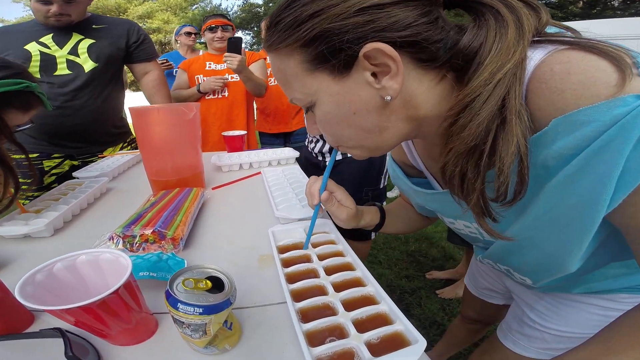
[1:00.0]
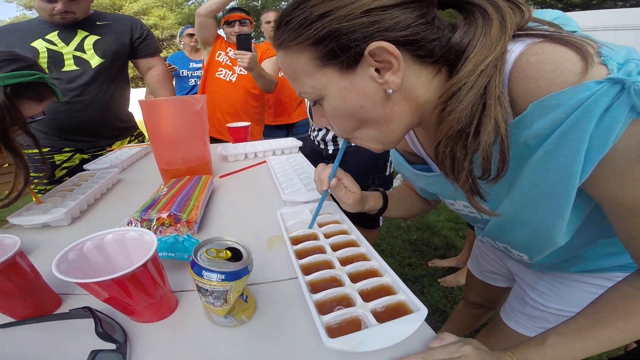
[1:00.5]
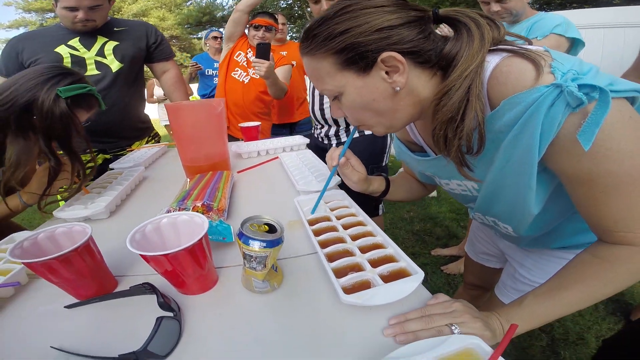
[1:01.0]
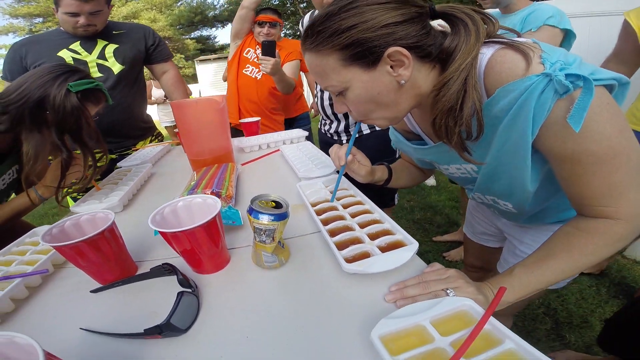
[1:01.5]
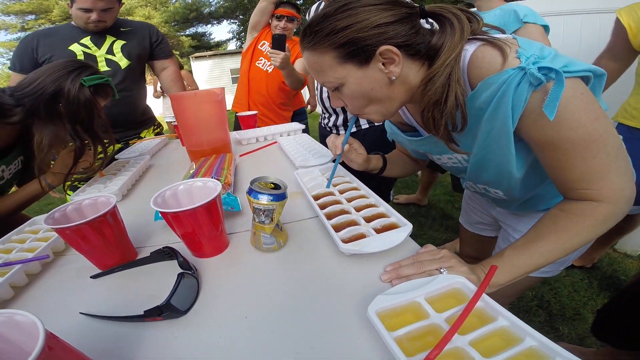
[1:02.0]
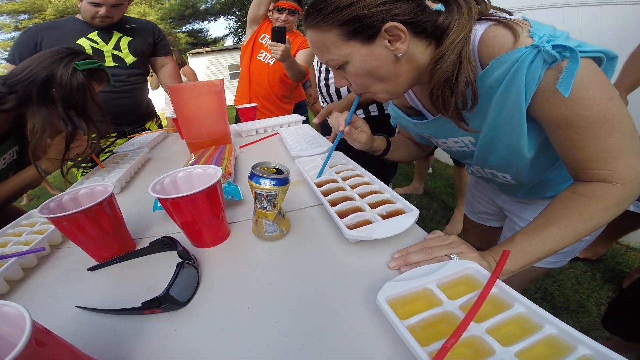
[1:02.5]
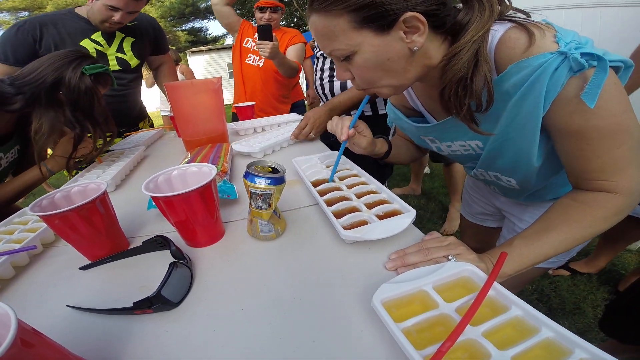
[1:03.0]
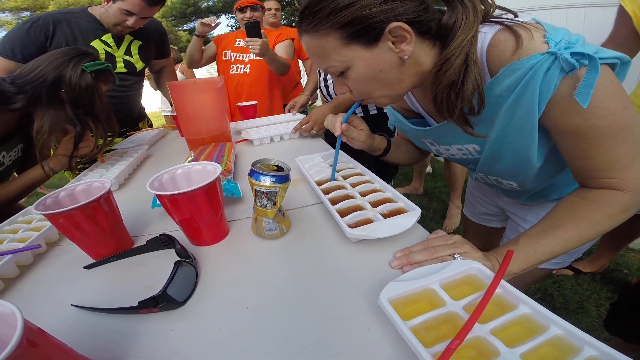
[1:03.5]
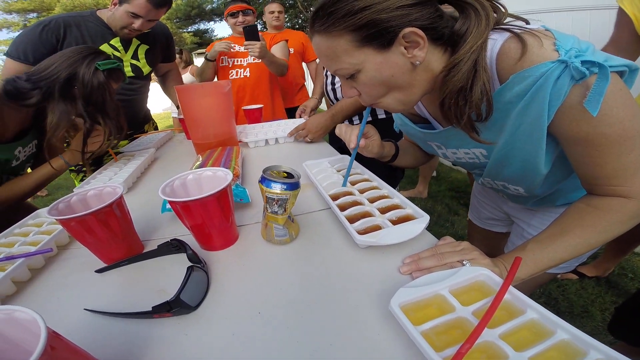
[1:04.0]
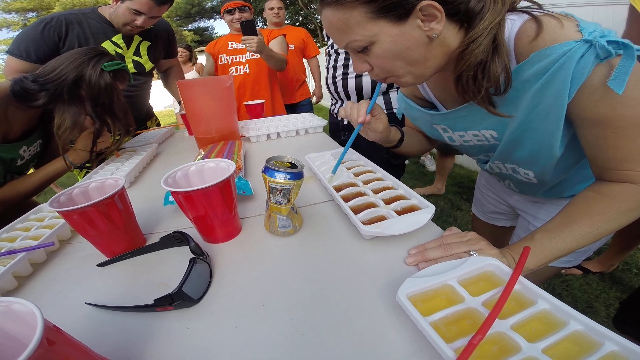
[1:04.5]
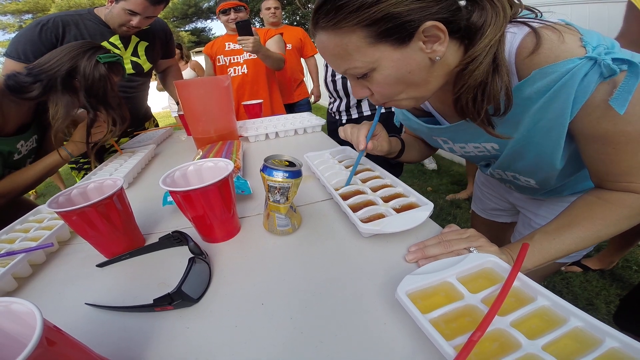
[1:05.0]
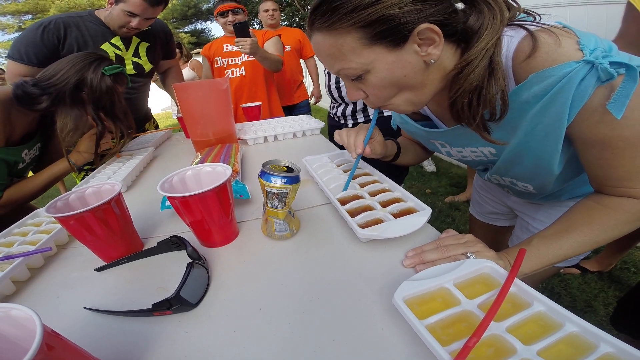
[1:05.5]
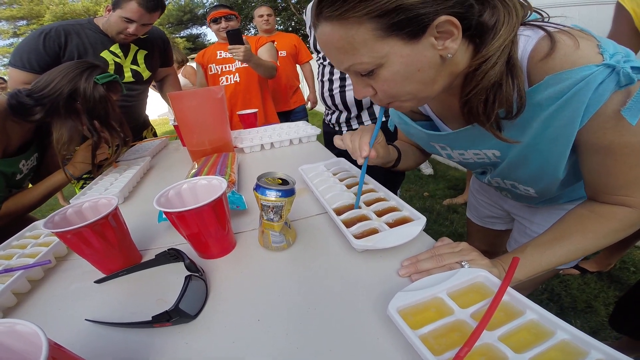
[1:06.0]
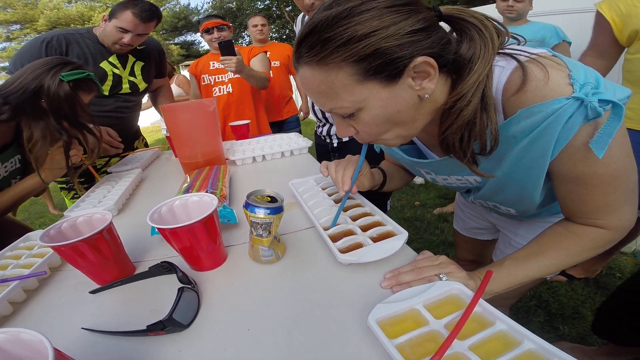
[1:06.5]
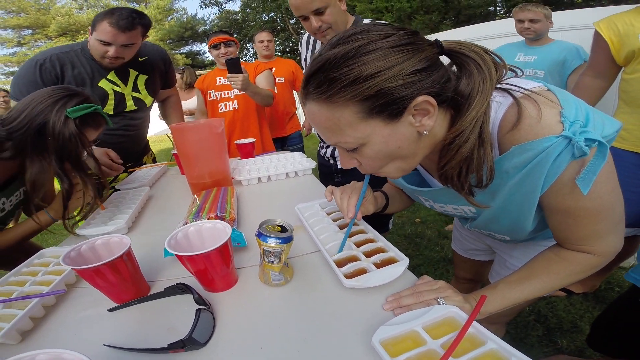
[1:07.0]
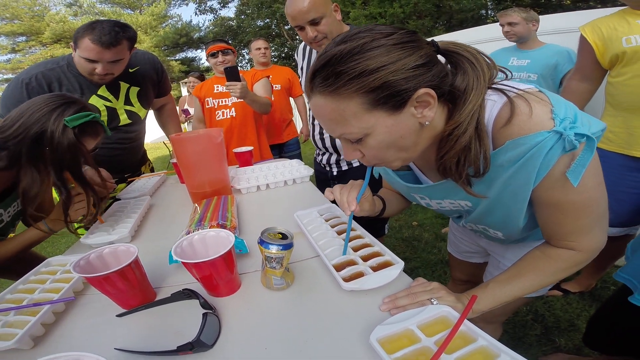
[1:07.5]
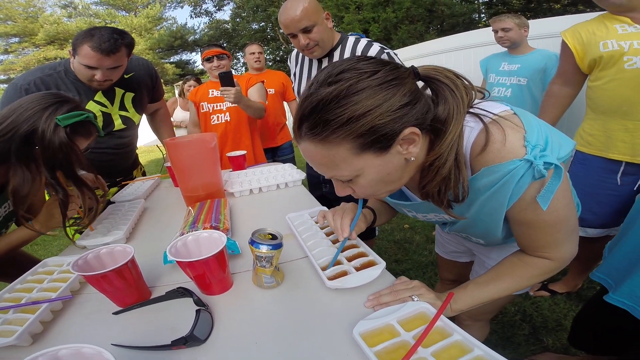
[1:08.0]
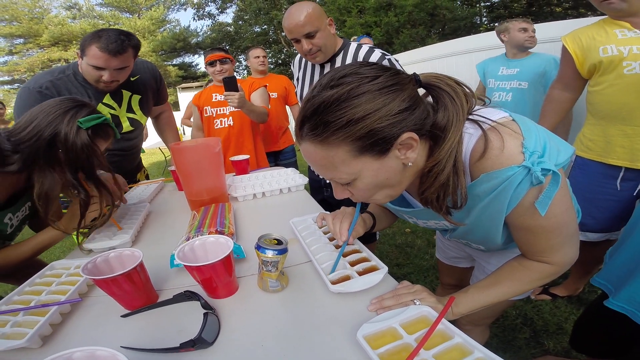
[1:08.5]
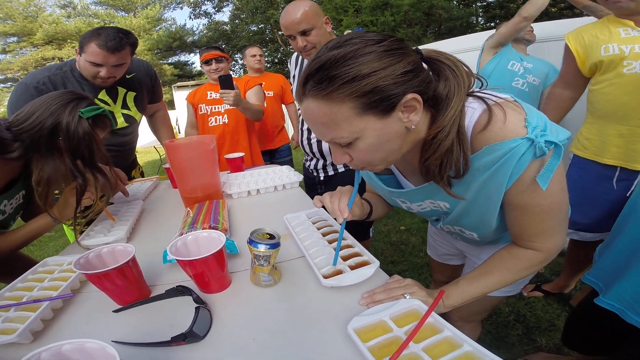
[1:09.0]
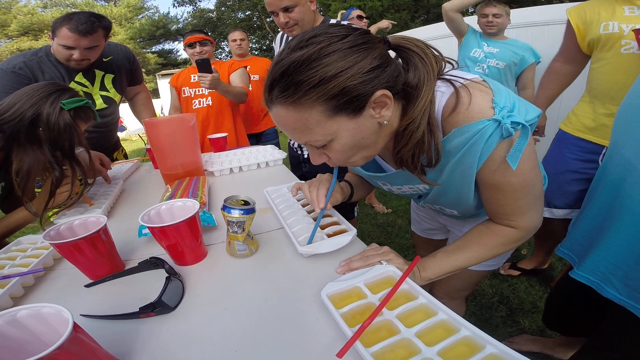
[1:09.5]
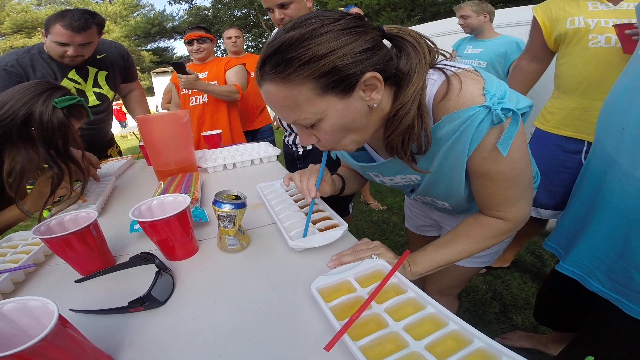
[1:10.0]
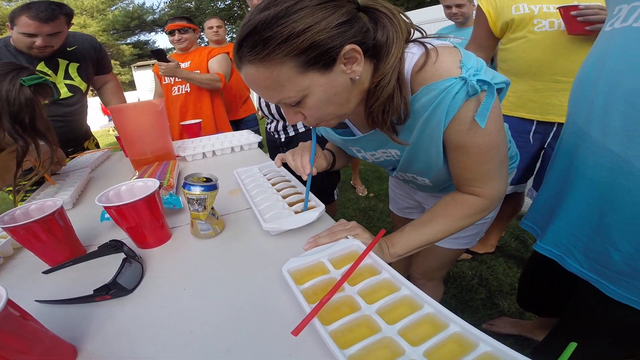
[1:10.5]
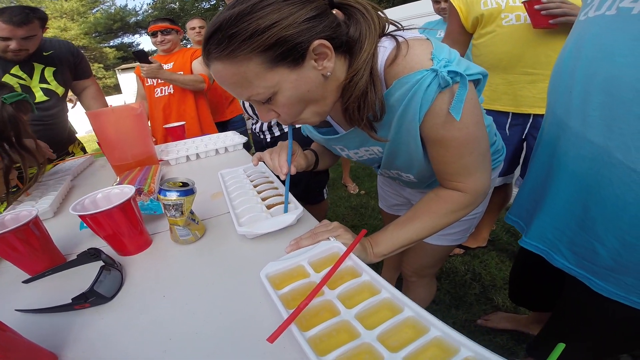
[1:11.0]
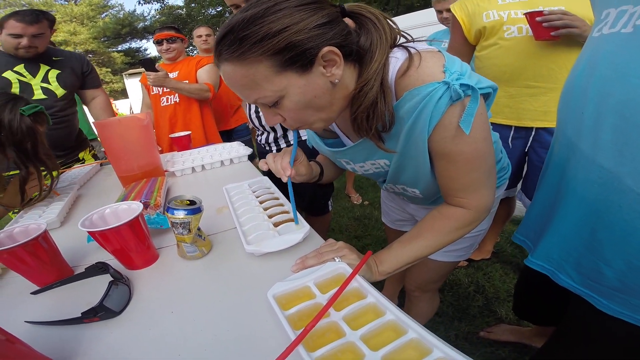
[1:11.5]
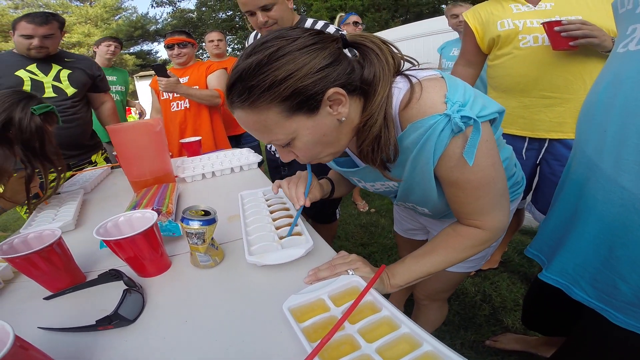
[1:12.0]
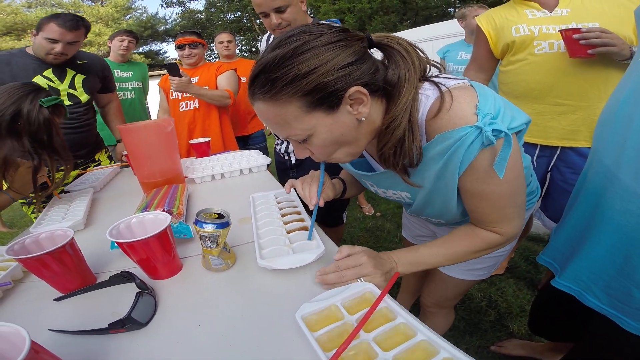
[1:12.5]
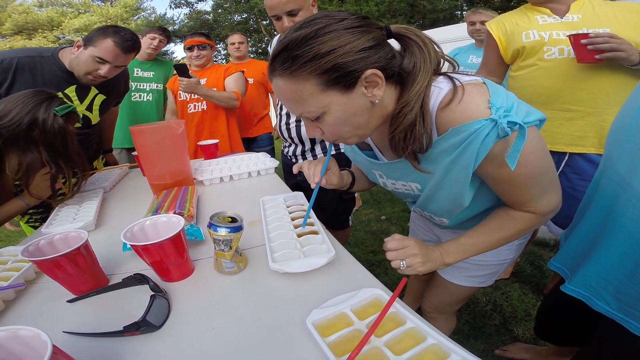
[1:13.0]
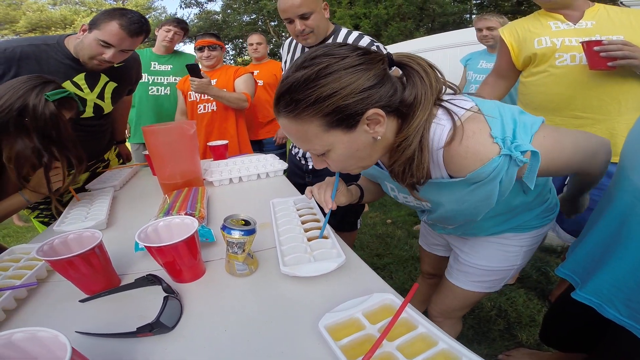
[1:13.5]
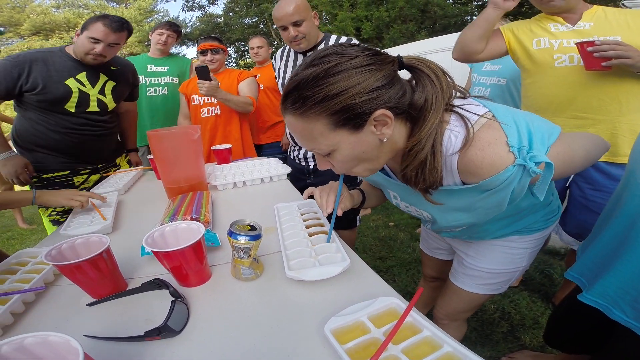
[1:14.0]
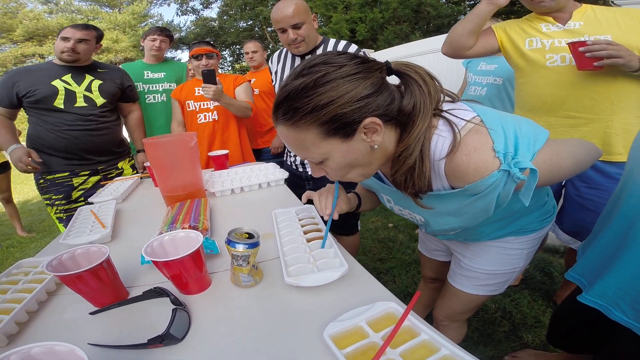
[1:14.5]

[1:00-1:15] A close-up shows the woman on the right, on the light blue team, drinking the brownish liquid through her light blue straw. She finishes the top row of the ice cube tray, then comes back to work on the lower portion, slurping the beer through the straw; the beer is not visible running through the straw. In front of her there appears to be a crushed empty can, either a beer can or perhaps a lemonade can, yellow with sort of blue around the top. She leans forward, as everyone has to. Across from her, the woman with dark brown hair on the other team finishes much later, and her partner to her right takes over; he is off screen, with only his ice cube tray visible on the table. The light blue team is winning easily. On the table between the two sides are a couple of red solo cups, some plastic sunglasses lying down, the crushed can, and a closed plastic package filled with colored straws, probably about 50 of them. A bunch of spectators stand around, most of them seemingly in the same style of T-shirts, just for different teams.